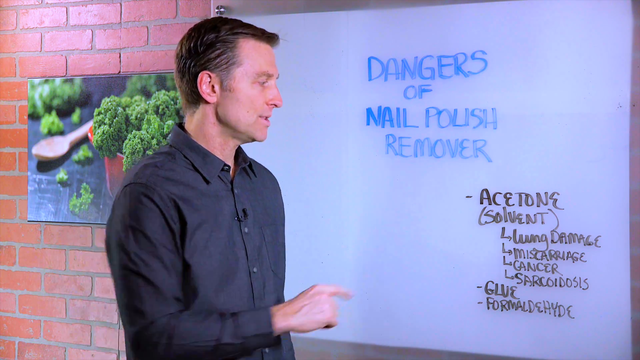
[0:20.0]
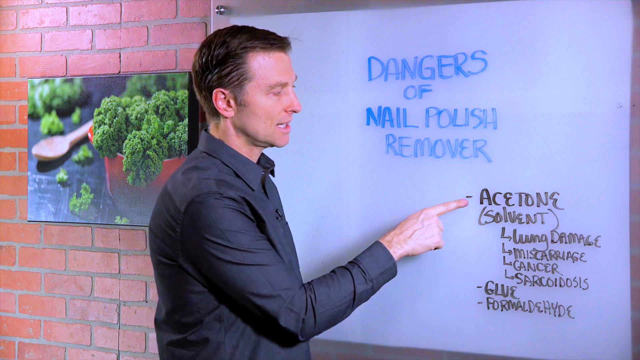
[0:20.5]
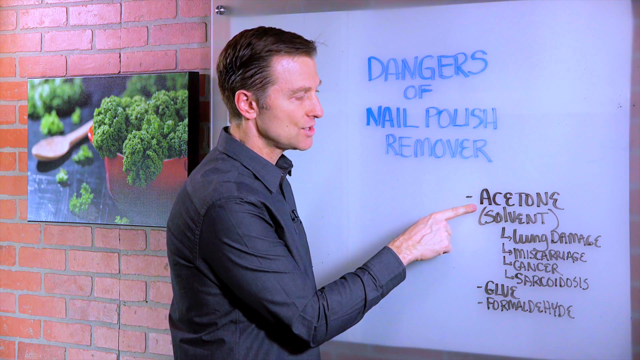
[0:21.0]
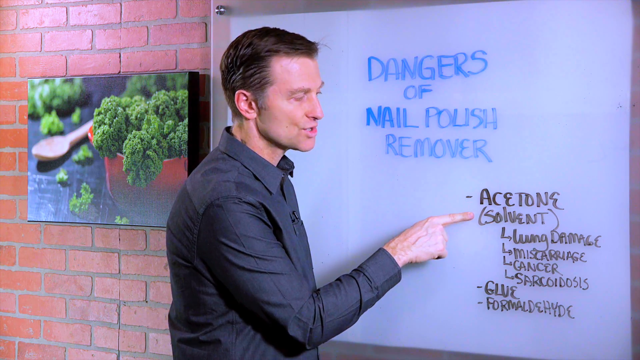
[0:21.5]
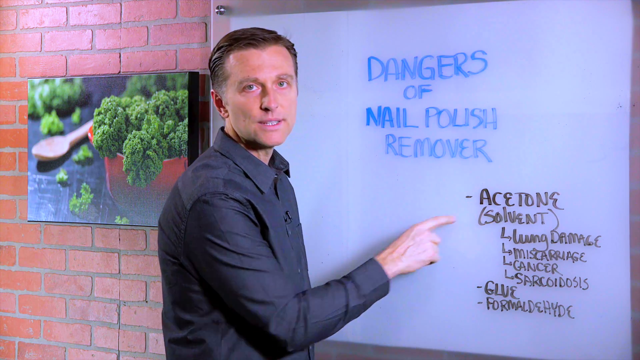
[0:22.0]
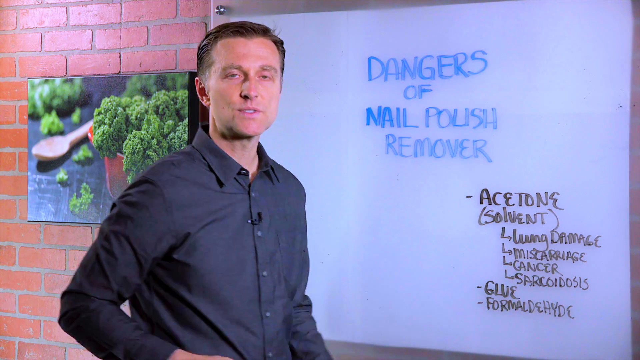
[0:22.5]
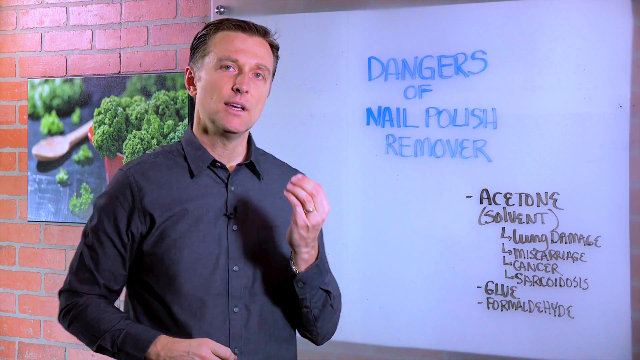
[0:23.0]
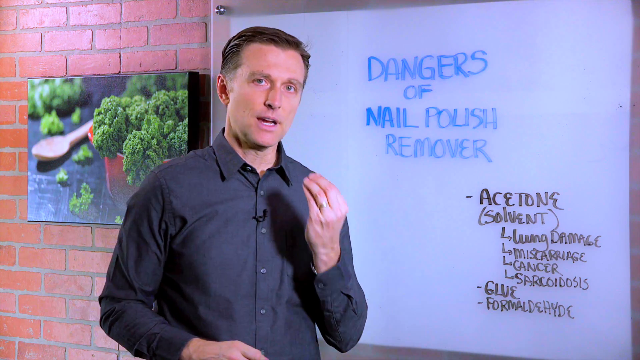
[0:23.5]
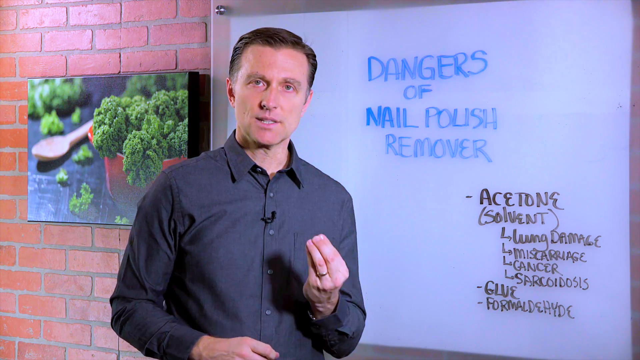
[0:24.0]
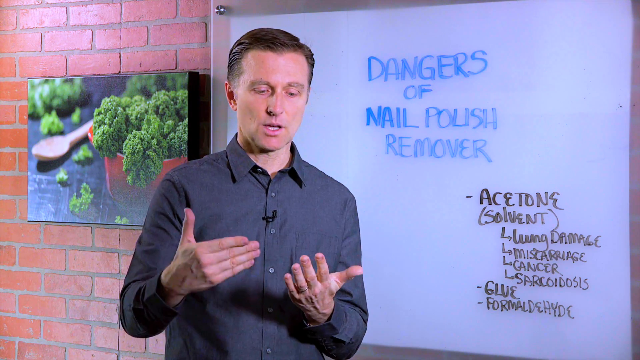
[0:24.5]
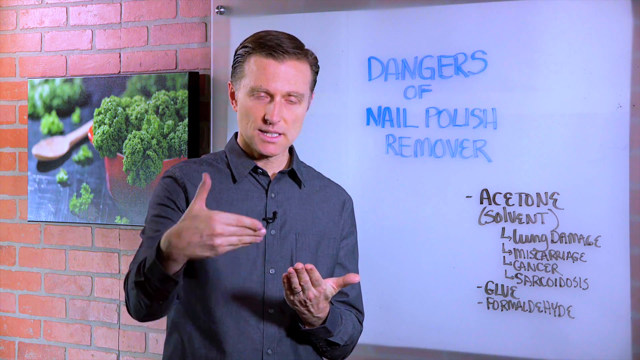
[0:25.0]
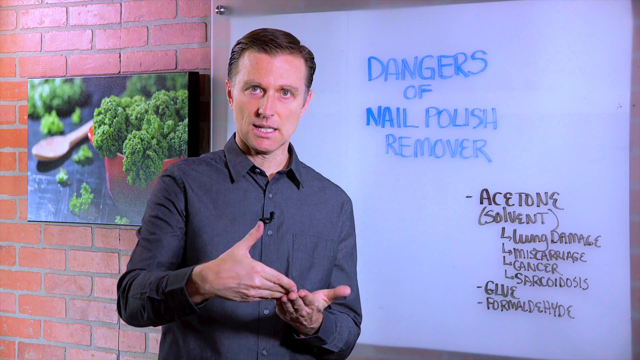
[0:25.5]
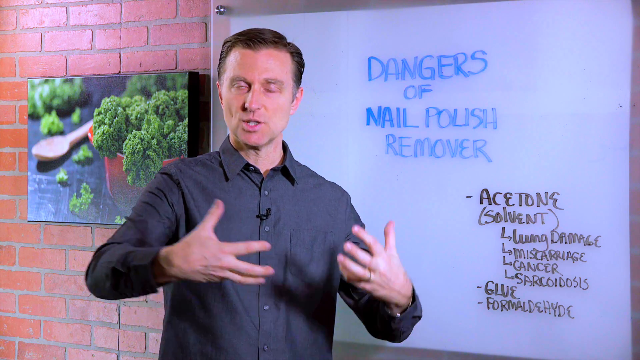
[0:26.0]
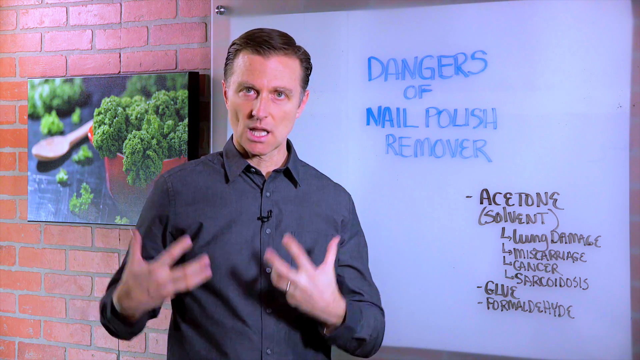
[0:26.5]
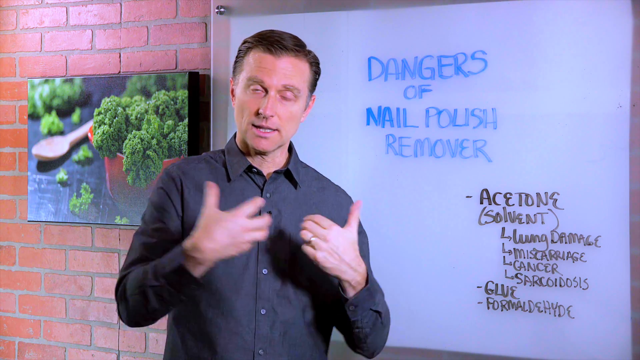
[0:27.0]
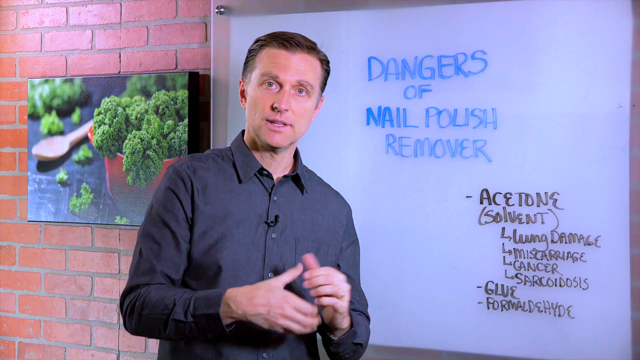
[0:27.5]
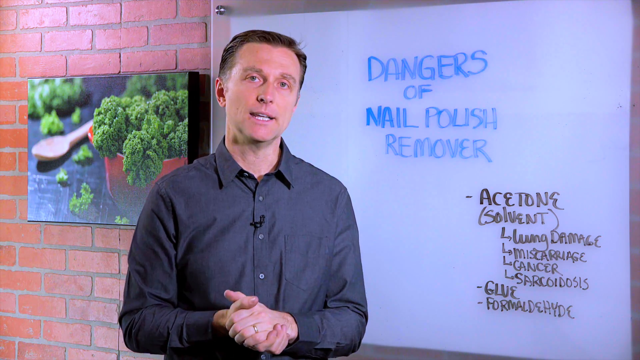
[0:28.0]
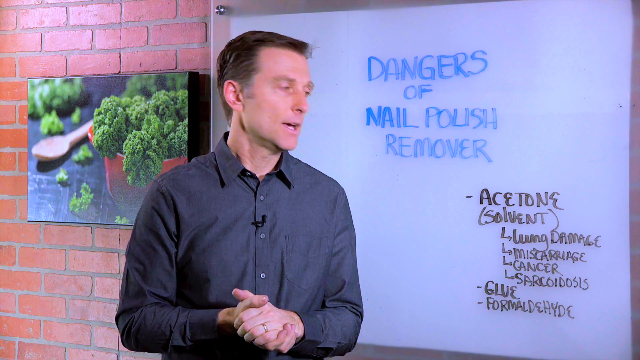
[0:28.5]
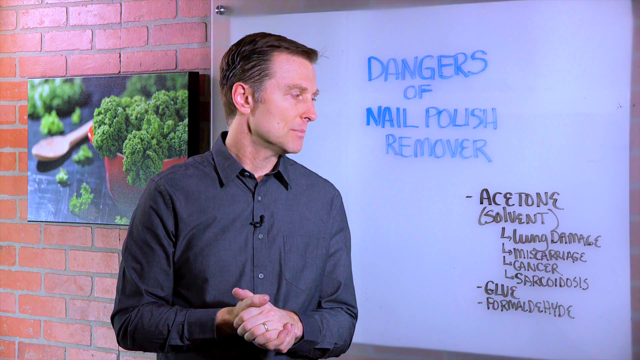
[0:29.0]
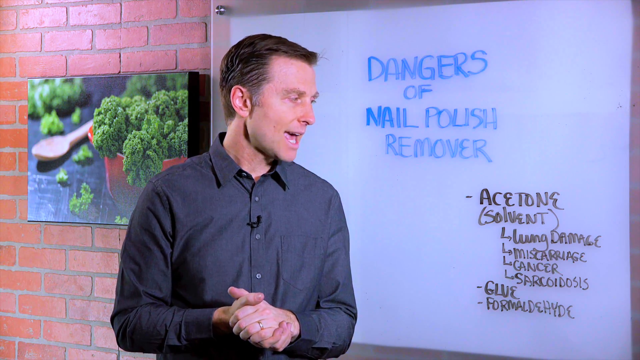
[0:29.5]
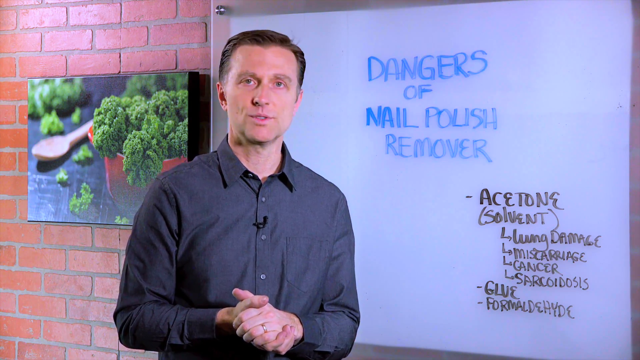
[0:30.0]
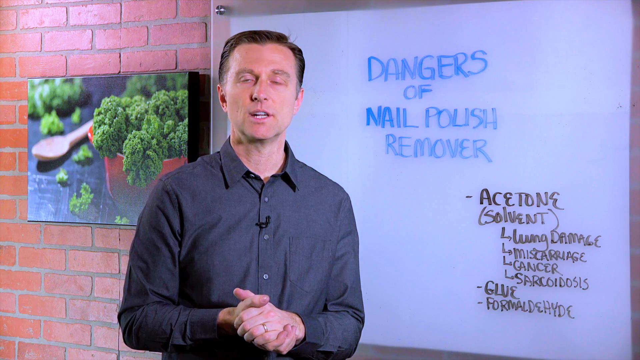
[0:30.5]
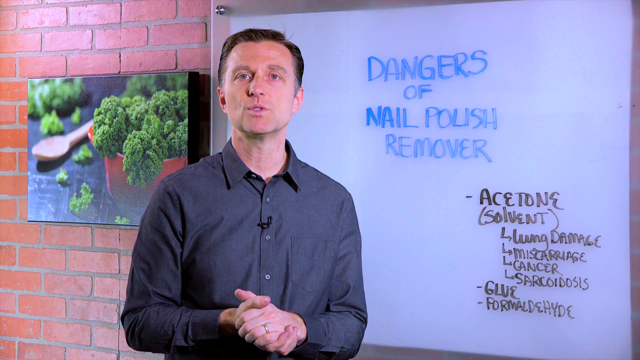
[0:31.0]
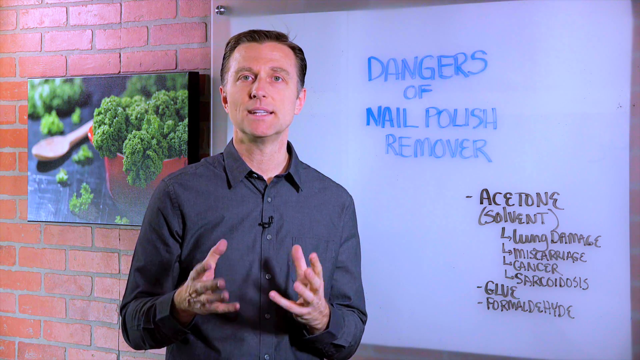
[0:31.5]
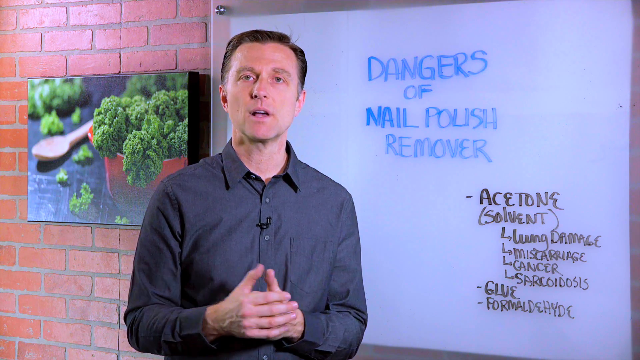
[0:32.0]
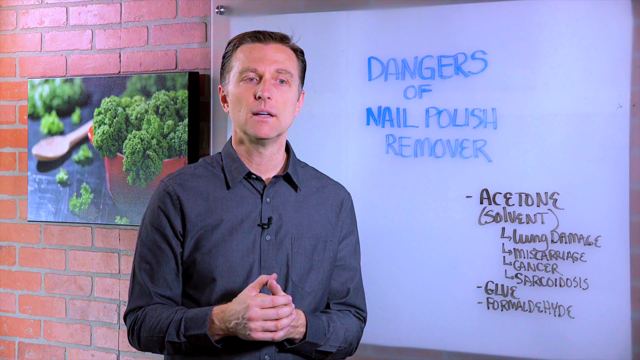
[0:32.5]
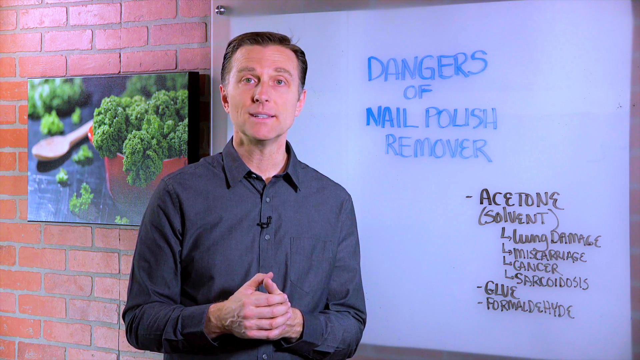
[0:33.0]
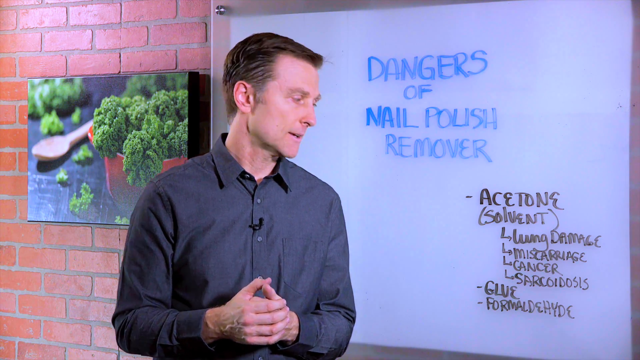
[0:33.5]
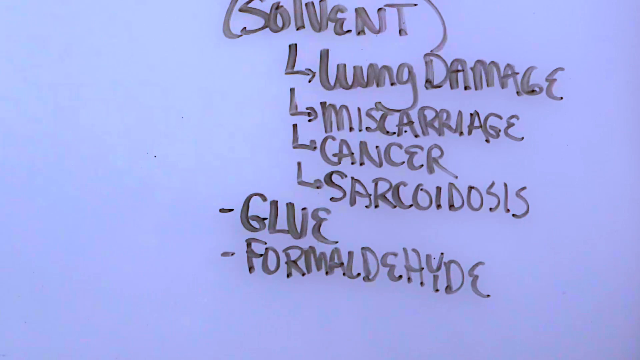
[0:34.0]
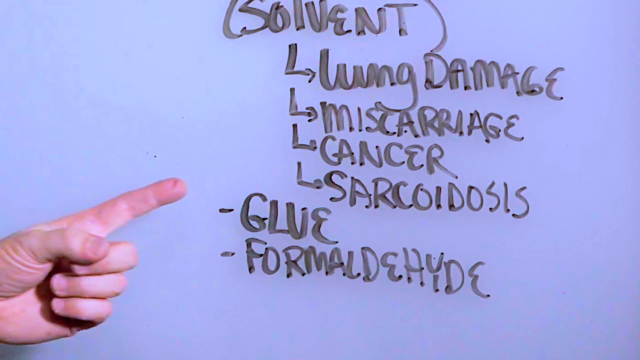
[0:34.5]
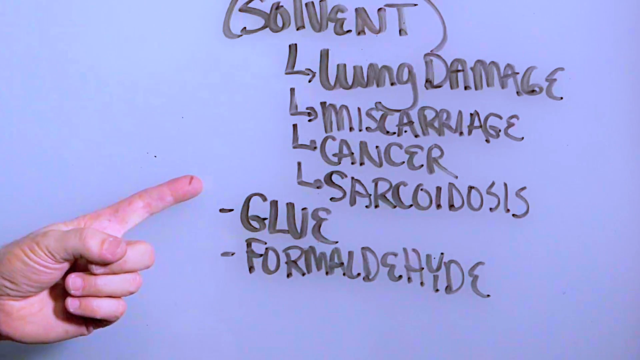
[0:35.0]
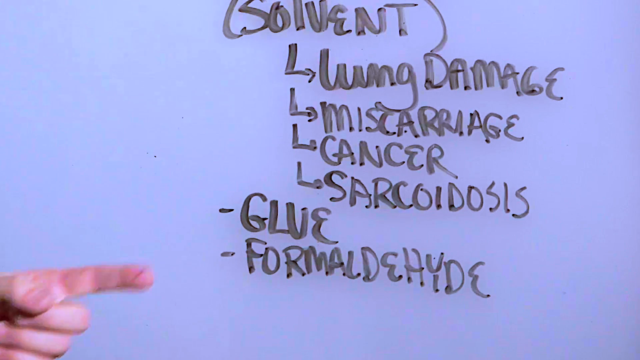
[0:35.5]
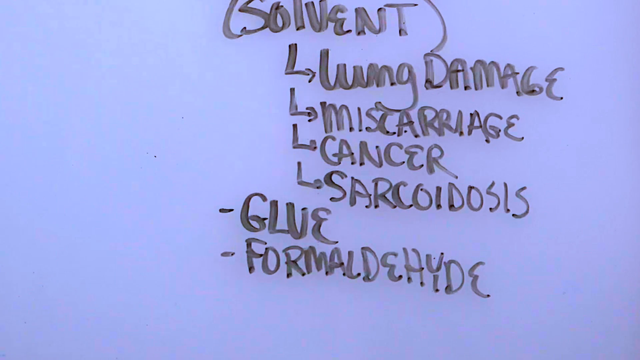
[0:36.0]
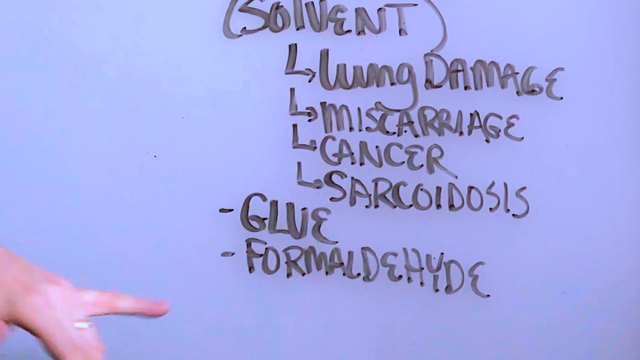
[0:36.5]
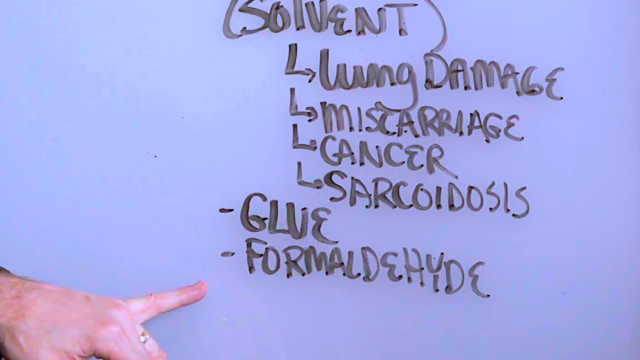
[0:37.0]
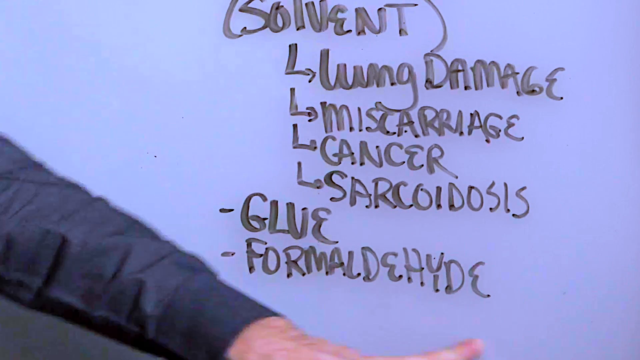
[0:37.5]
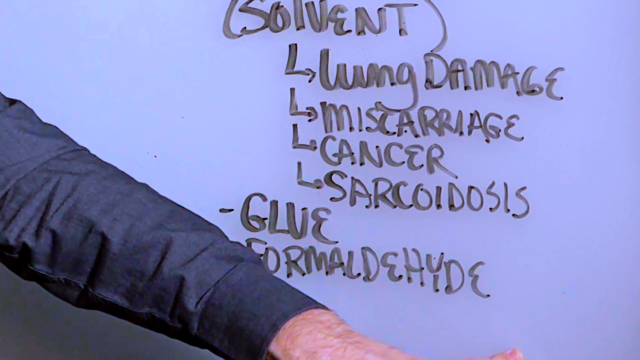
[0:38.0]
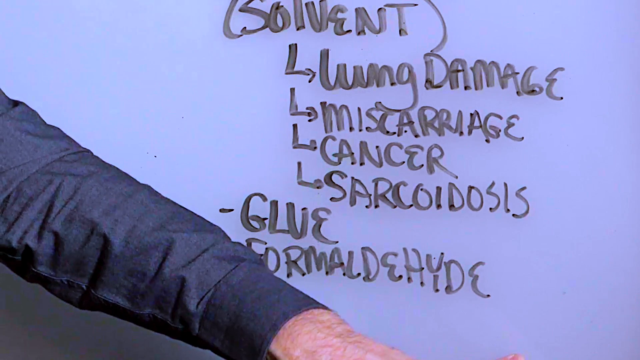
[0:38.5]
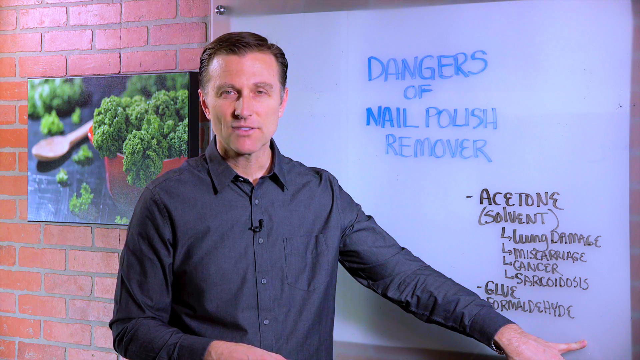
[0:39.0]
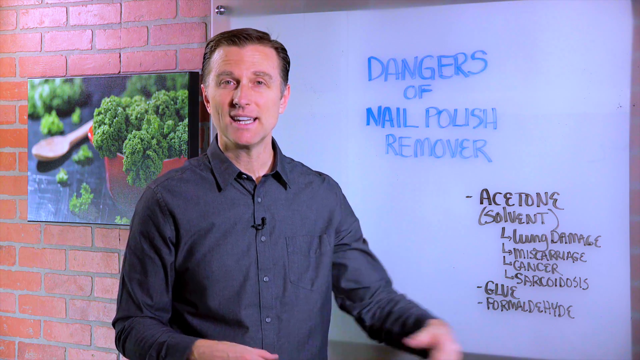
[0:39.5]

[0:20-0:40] The speaker points with his right pointer finger to the word "acetone," which is written in black, while speaking. He turns back to the camera and talks, at times gesturing with his hands. A close-up of the dry erase board on the wall follows, with the focus moving to the next two bullet points, "glue" and "formaldehyde." Part of the man's hand or arm comes into the frame; he points to "glue" and then to something toward the bottom of the board. He then turns back and talks to the camera.